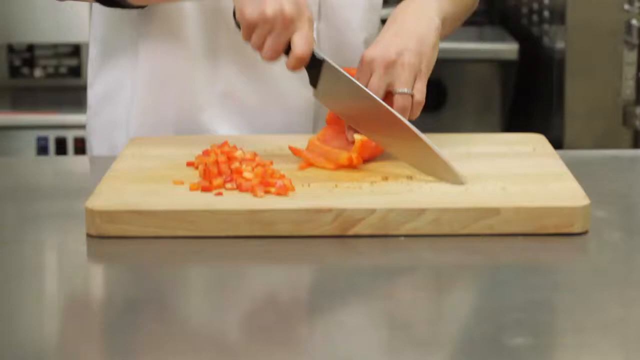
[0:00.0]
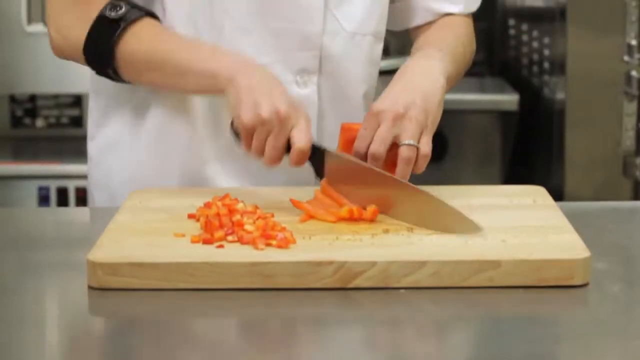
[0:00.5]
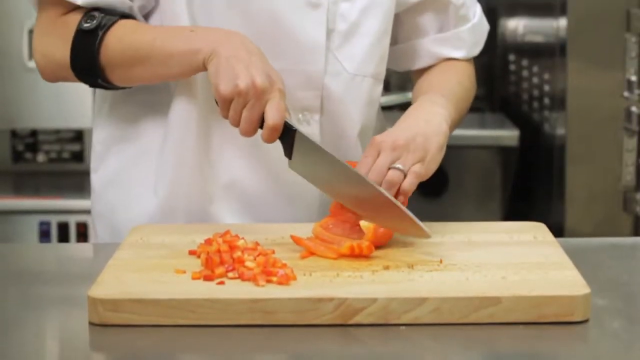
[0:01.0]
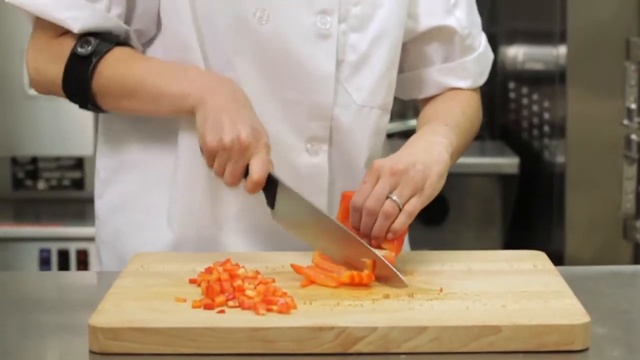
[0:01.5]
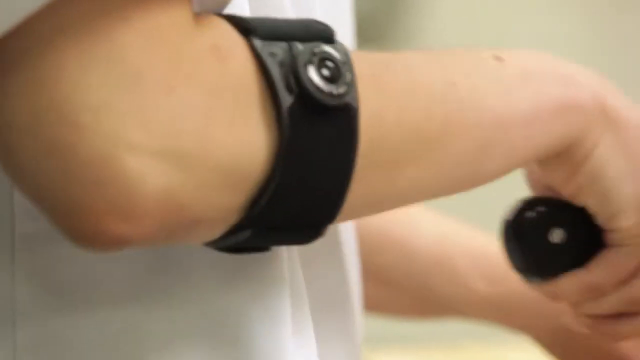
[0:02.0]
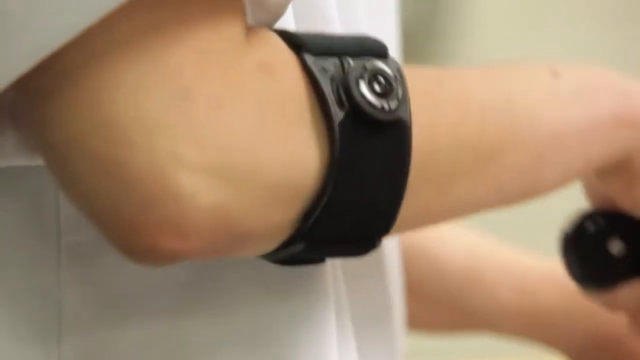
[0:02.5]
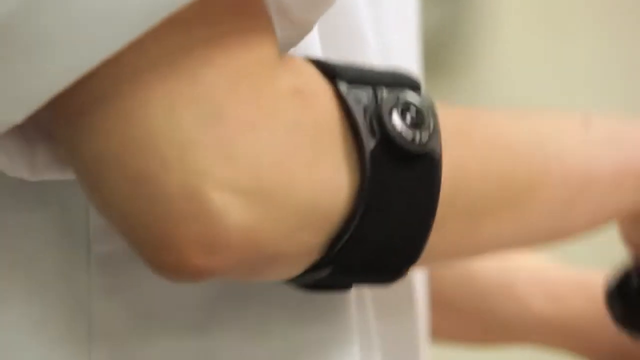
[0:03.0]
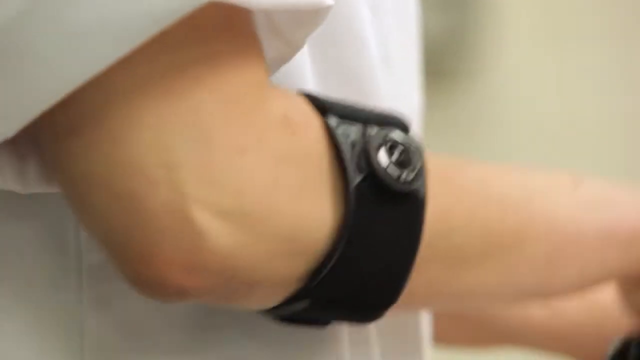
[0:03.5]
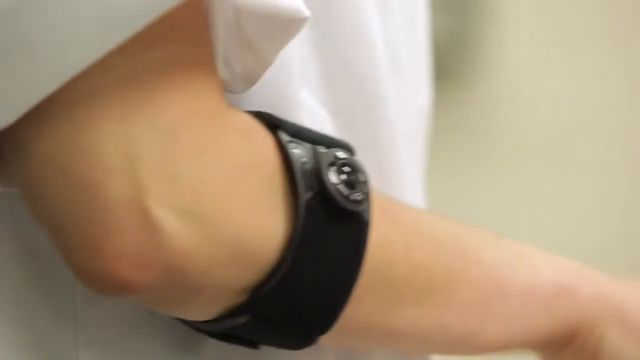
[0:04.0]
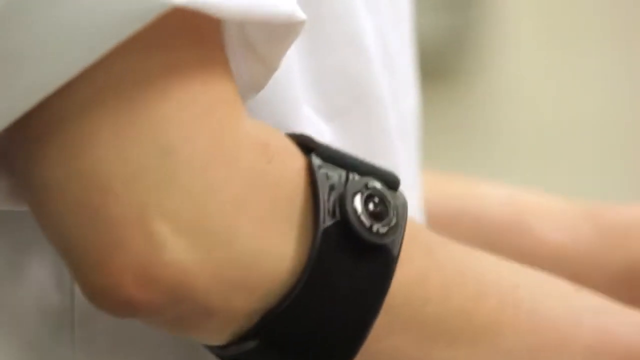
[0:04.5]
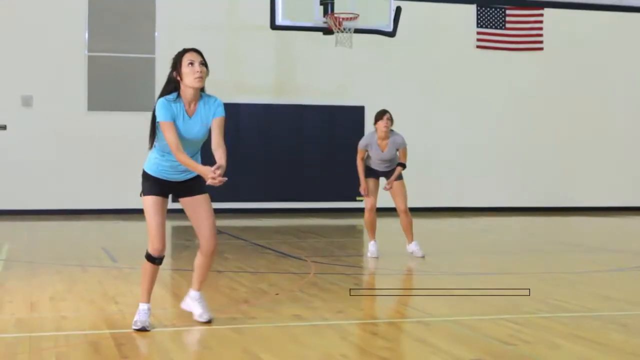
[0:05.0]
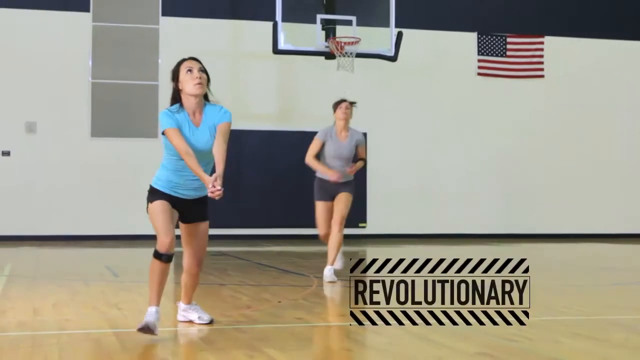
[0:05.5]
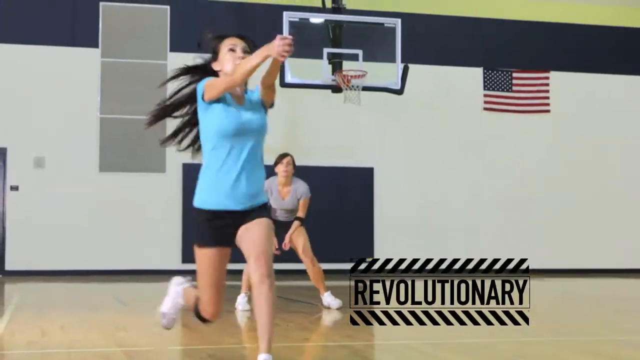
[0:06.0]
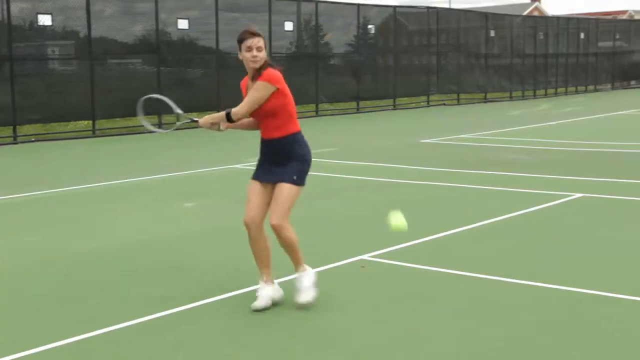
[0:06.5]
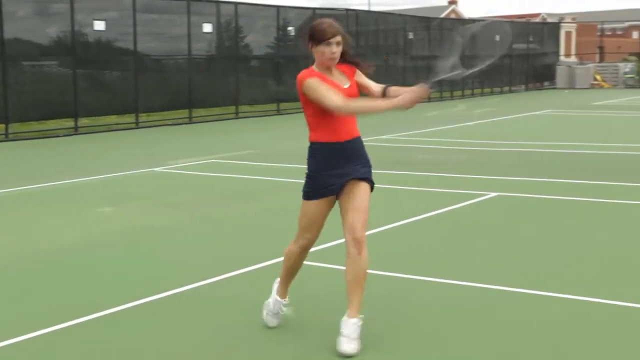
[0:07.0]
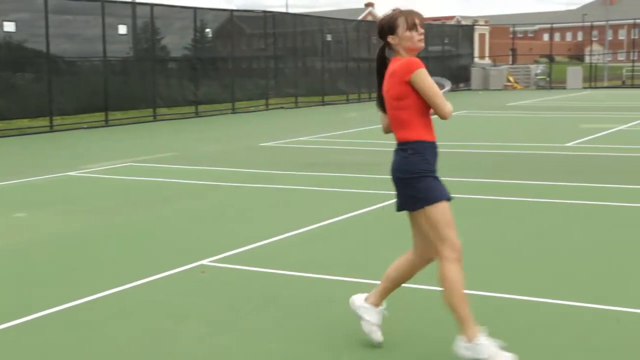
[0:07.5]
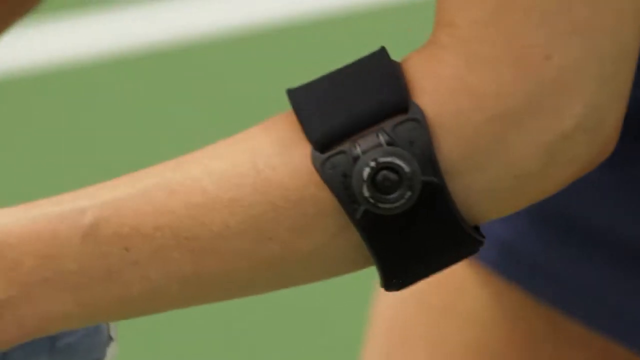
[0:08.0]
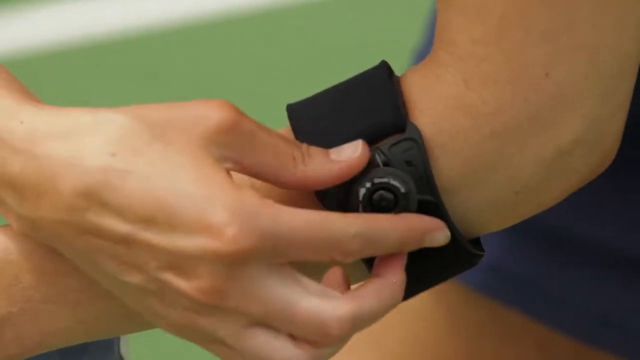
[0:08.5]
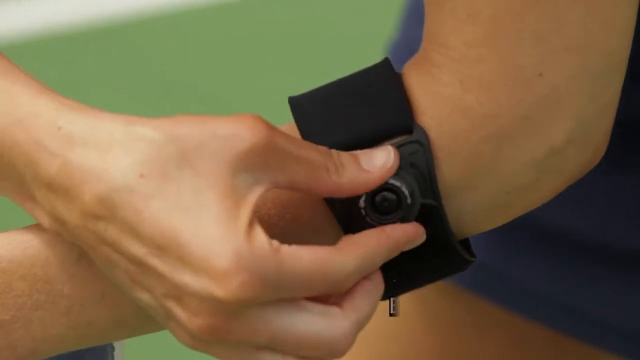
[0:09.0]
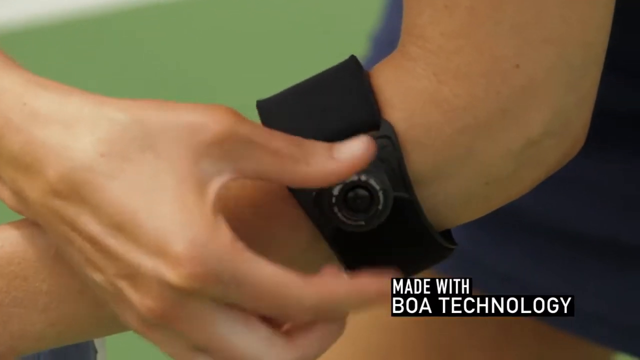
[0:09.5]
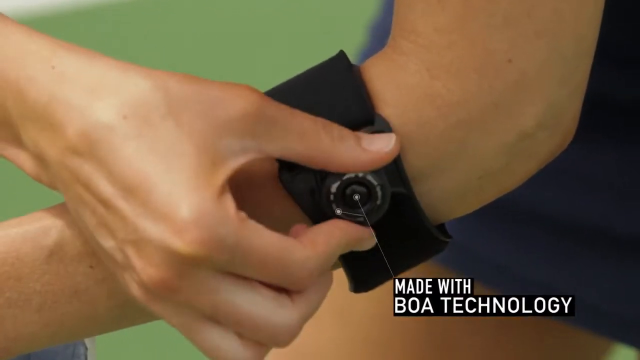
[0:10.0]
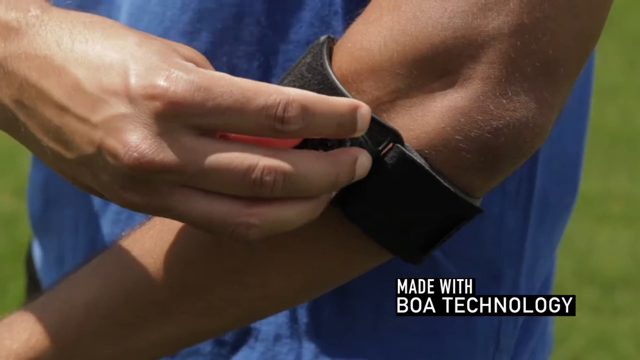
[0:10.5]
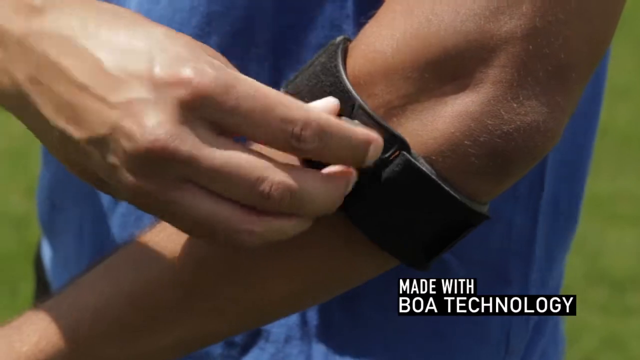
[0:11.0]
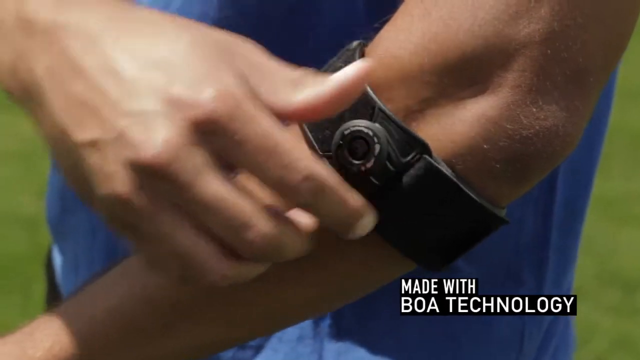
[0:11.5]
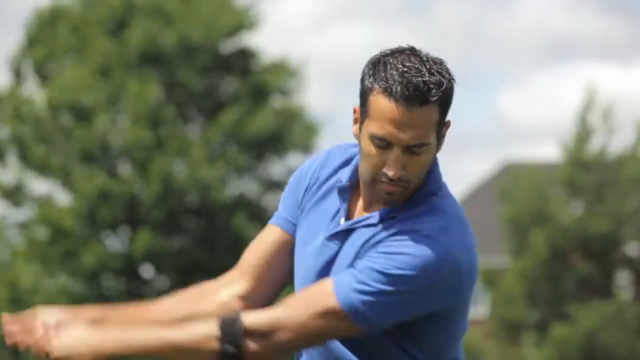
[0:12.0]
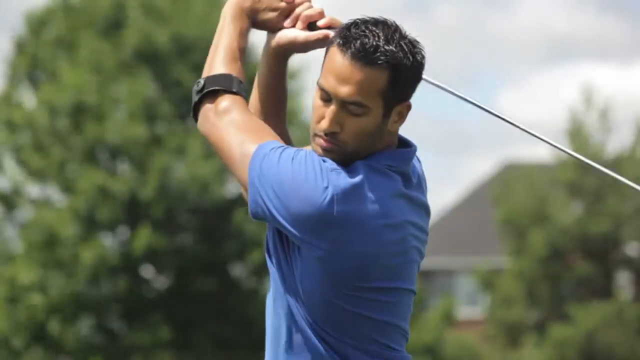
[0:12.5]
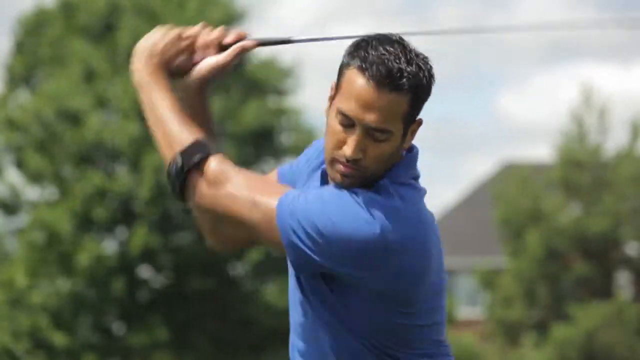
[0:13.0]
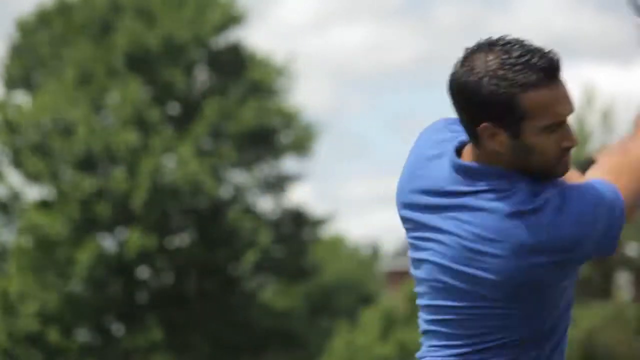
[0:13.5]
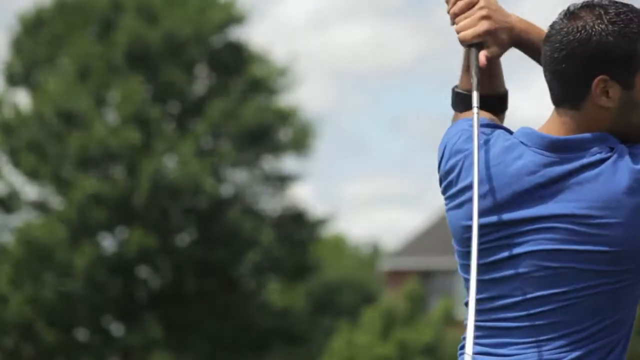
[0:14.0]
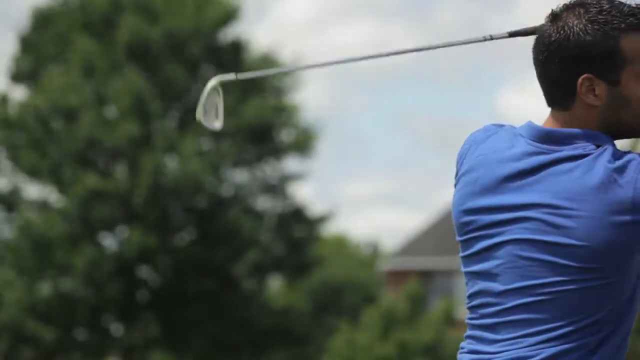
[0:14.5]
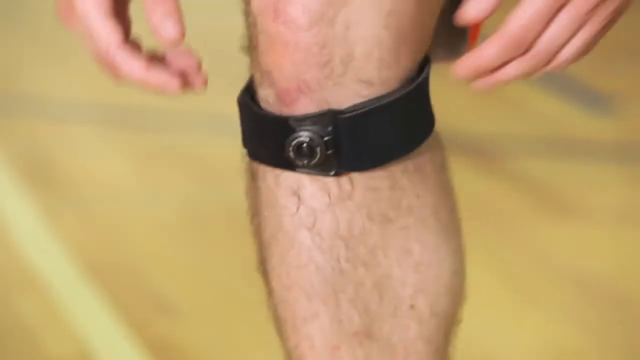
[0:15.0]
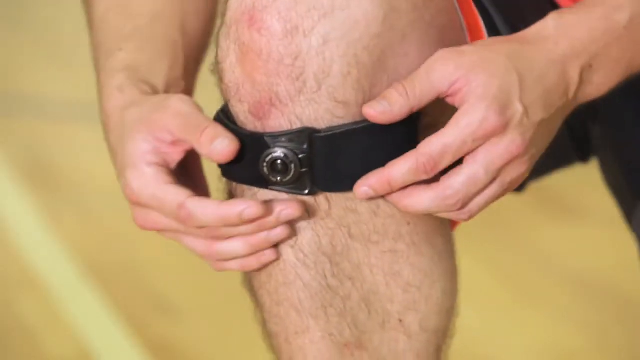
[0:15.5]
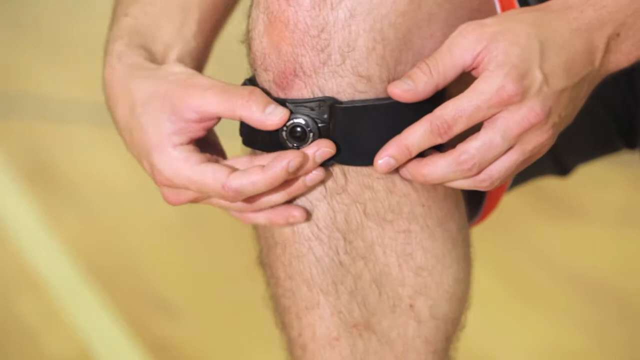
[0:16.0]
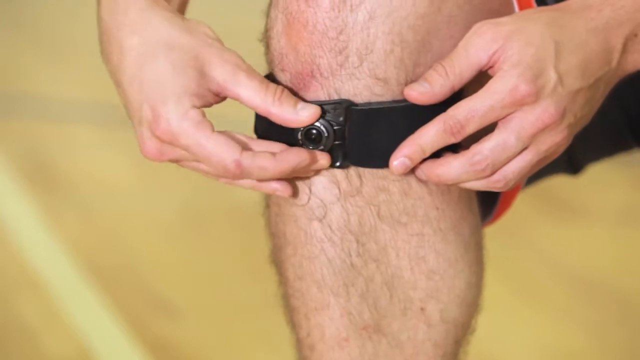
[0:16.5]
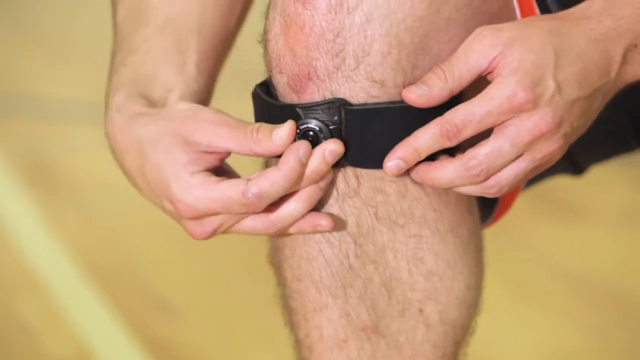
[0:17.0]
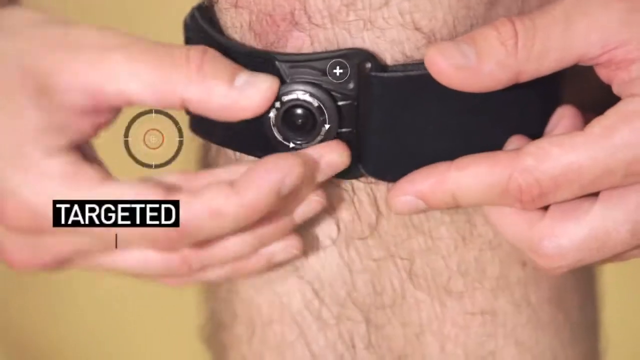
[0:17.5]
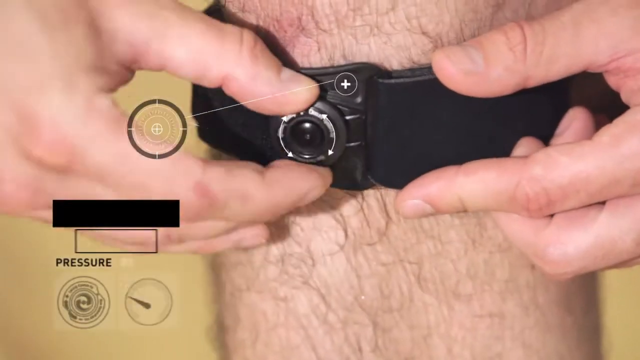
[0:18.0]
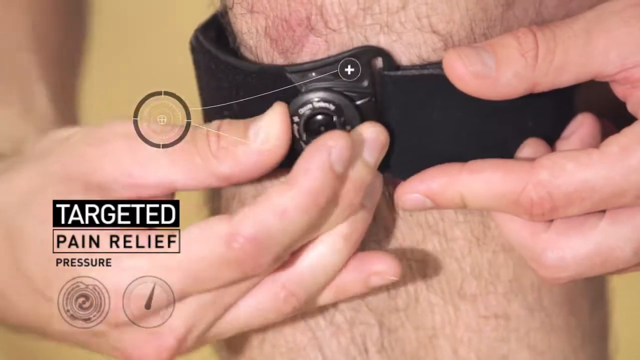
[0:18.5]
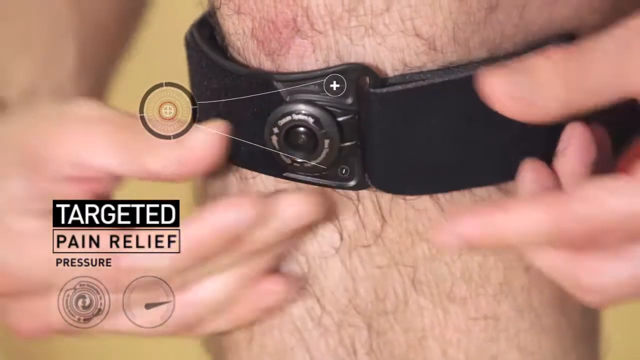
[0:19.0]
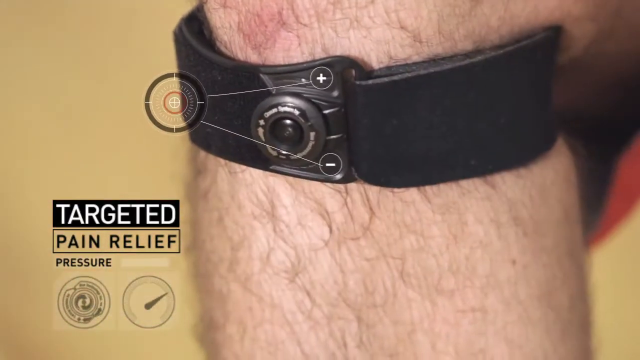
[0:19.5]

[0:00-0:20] A chef cuts up vegetables while prepping a meal and cooking, and the camera pans to a band she is wearing on her arm. Two volleyball players then hit a volleyball on a court. The camera pans to tennis players who have the same band and are rotating the knob on it, and a title comes up that says "made with Boa technology." Next, the camera pans to a golfer swinging at a golf ball with the same band on his arm. A man then kneels down and adjusts the knob, and text comes up that says "Targeted pain relief pressure." It appears to be an advertisement for some kind of pain-relief pressure band.